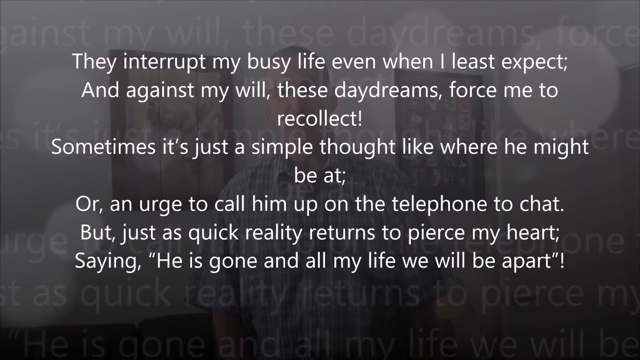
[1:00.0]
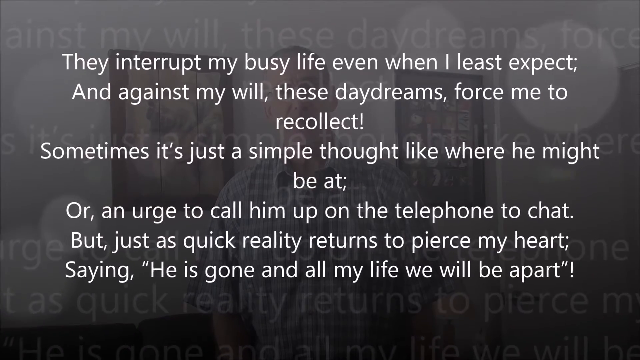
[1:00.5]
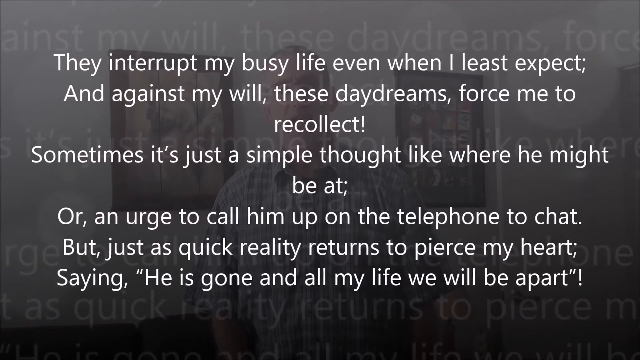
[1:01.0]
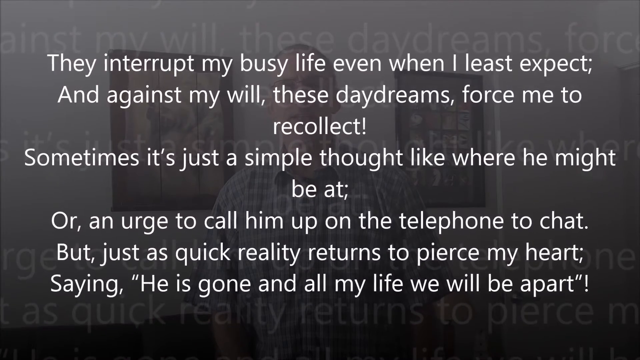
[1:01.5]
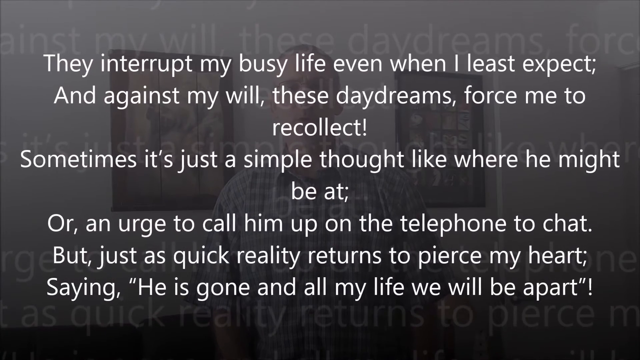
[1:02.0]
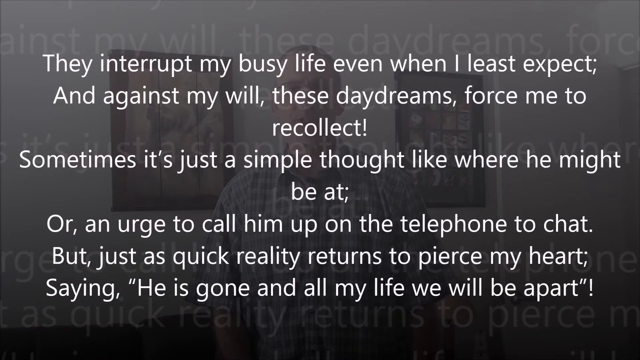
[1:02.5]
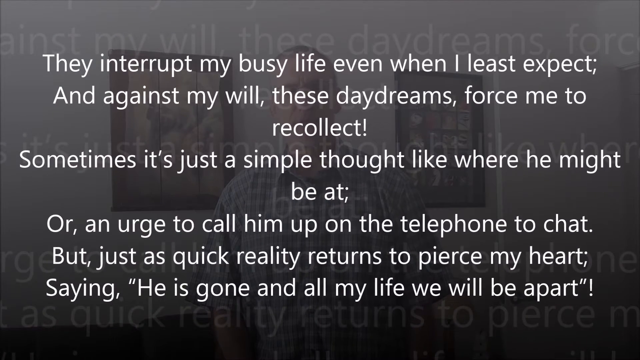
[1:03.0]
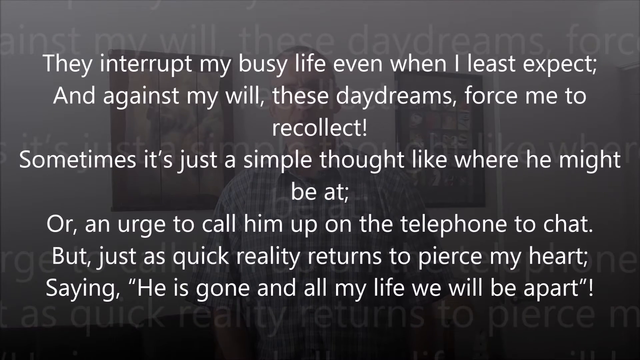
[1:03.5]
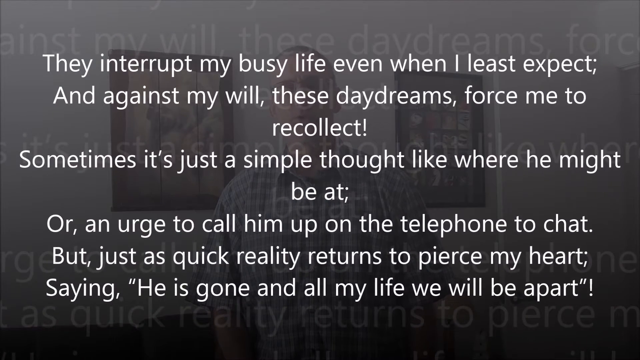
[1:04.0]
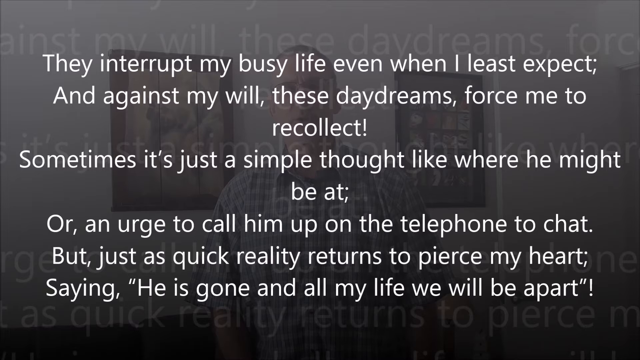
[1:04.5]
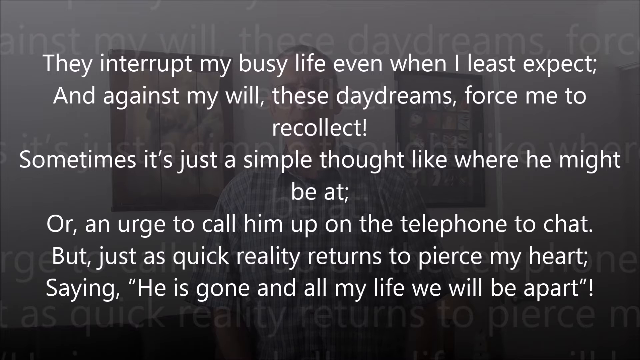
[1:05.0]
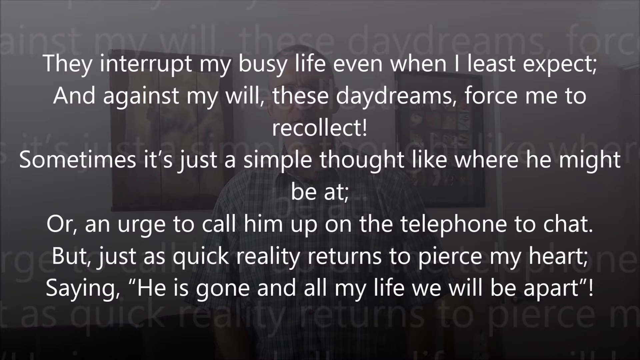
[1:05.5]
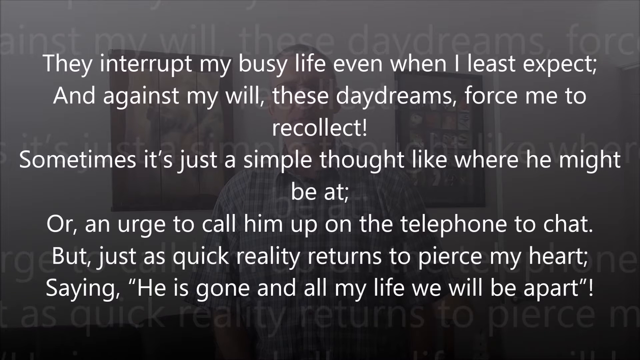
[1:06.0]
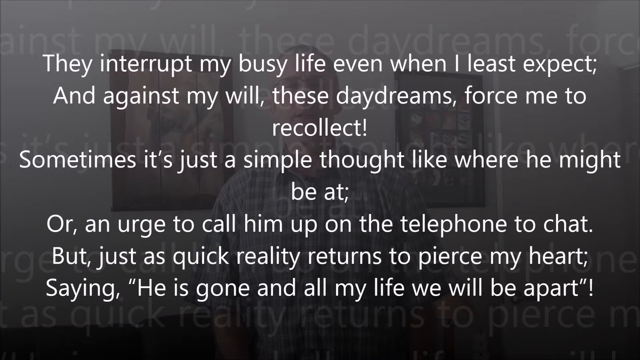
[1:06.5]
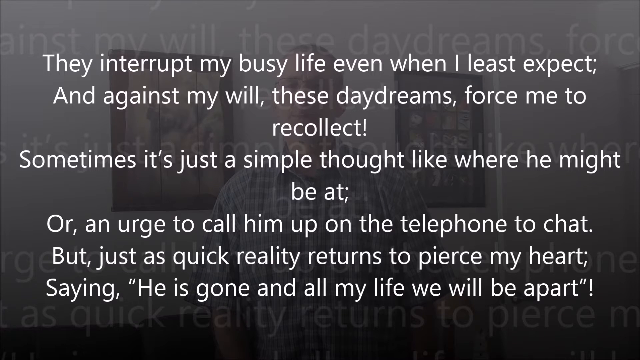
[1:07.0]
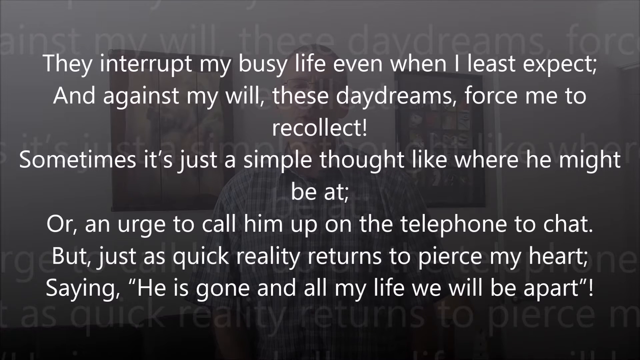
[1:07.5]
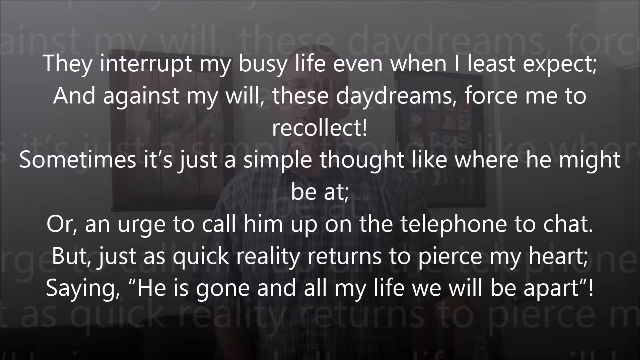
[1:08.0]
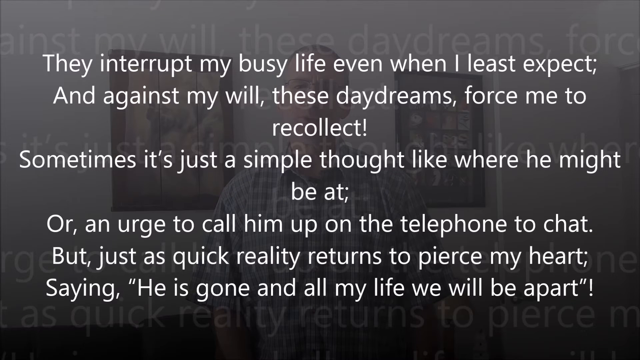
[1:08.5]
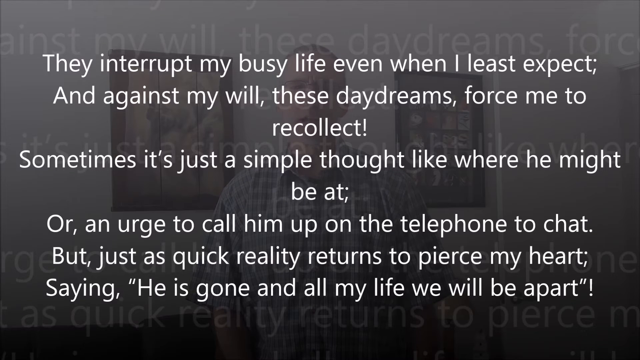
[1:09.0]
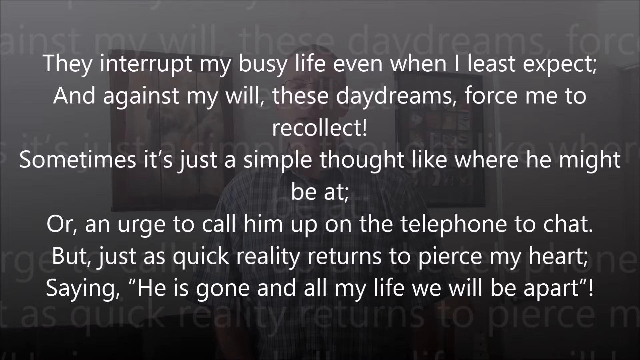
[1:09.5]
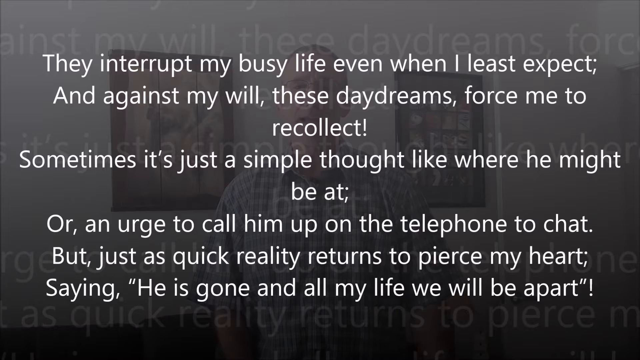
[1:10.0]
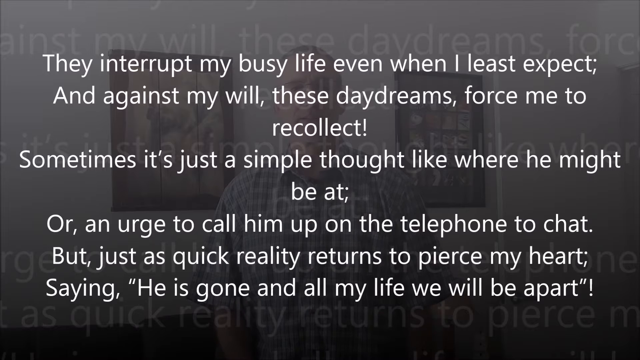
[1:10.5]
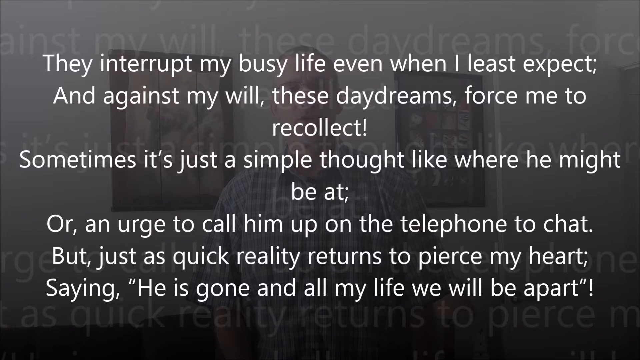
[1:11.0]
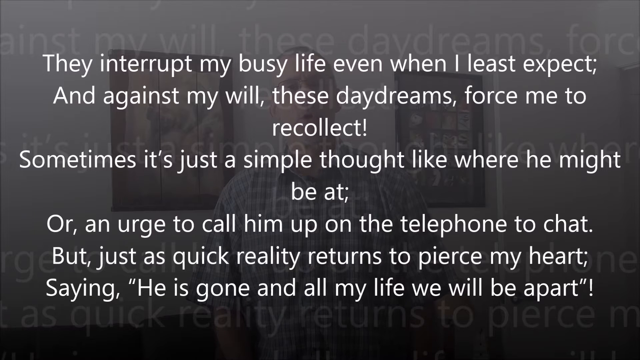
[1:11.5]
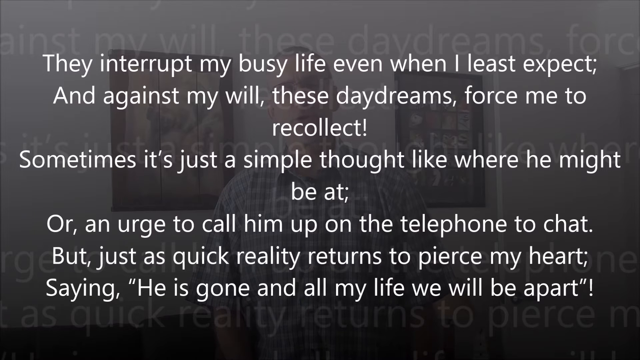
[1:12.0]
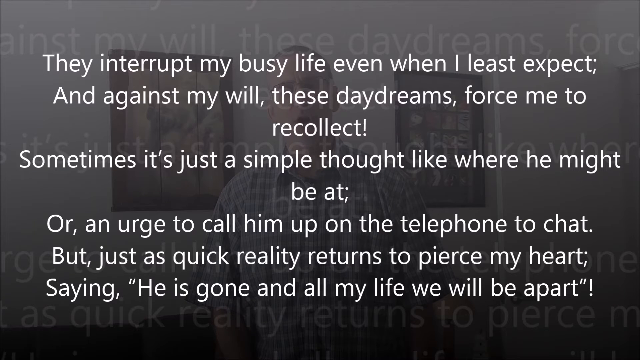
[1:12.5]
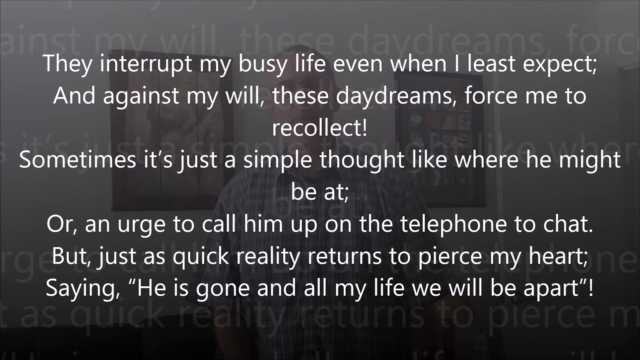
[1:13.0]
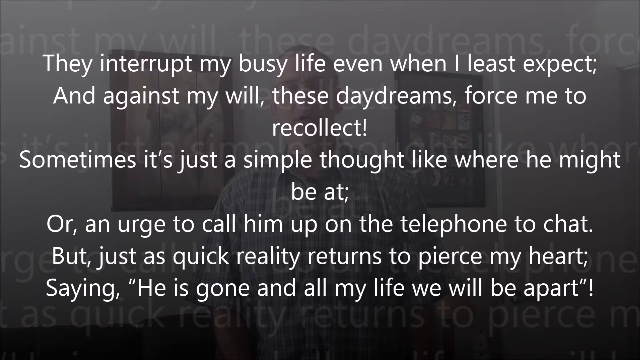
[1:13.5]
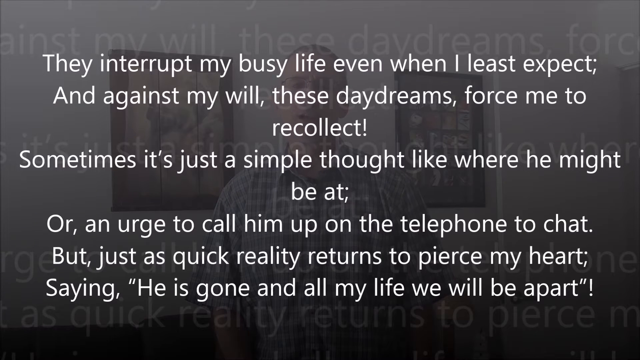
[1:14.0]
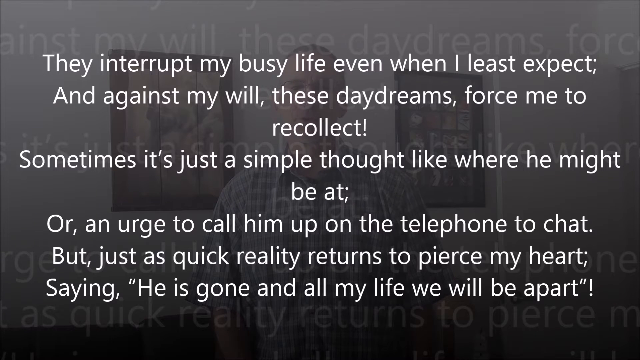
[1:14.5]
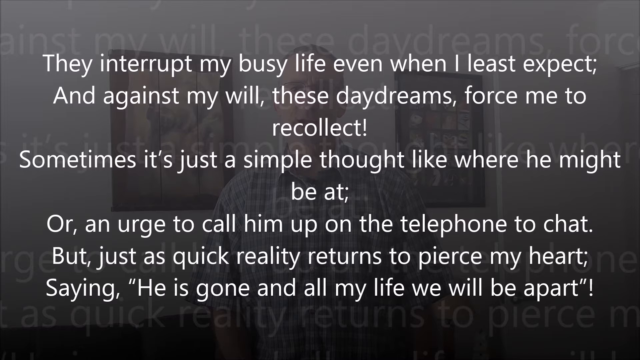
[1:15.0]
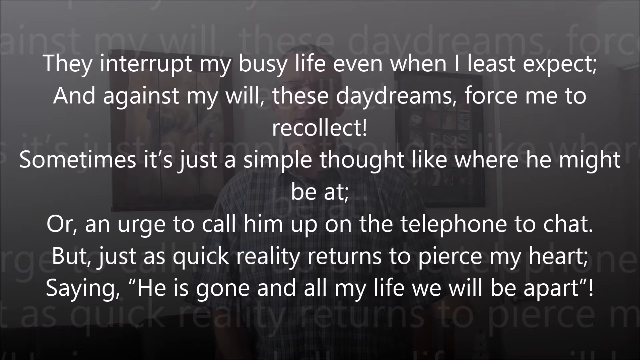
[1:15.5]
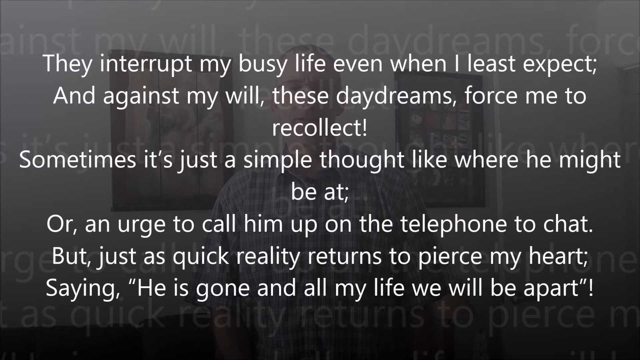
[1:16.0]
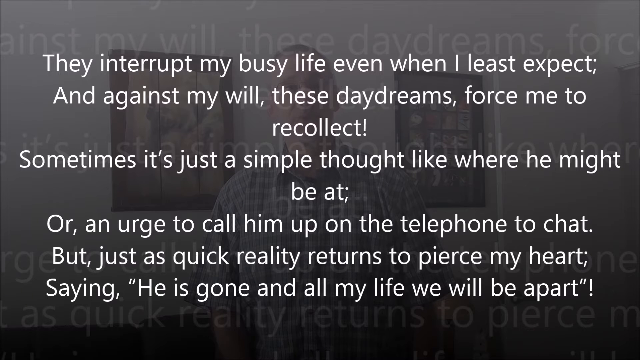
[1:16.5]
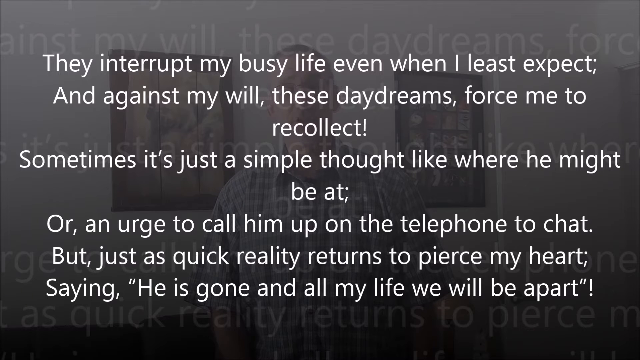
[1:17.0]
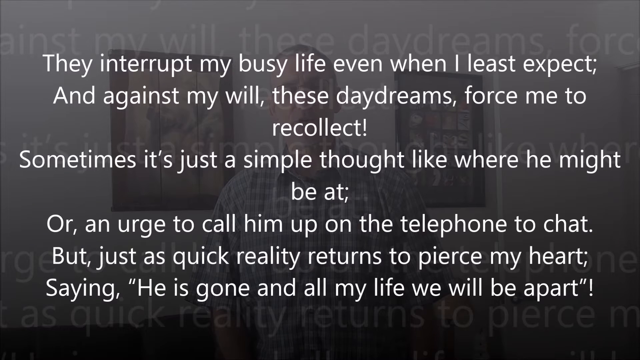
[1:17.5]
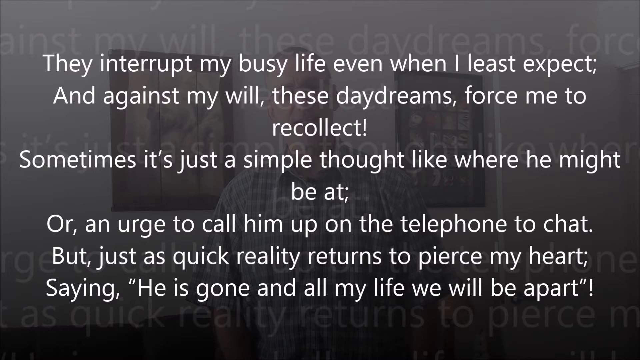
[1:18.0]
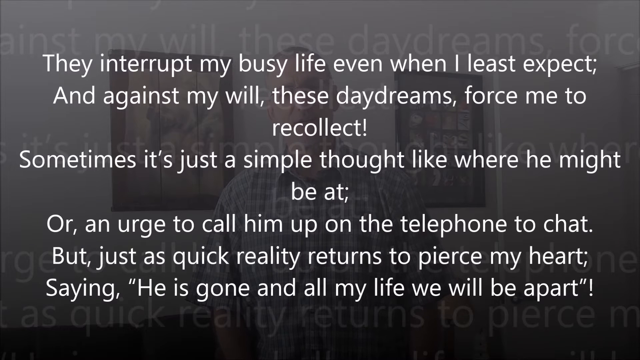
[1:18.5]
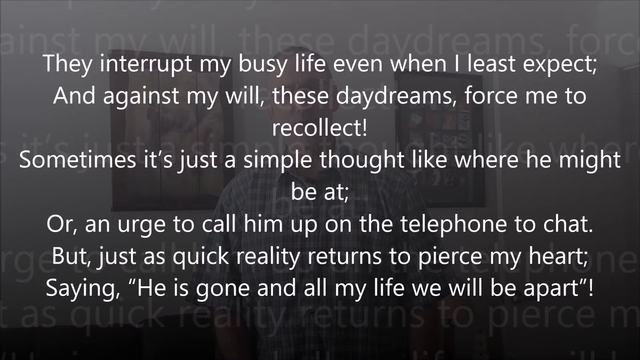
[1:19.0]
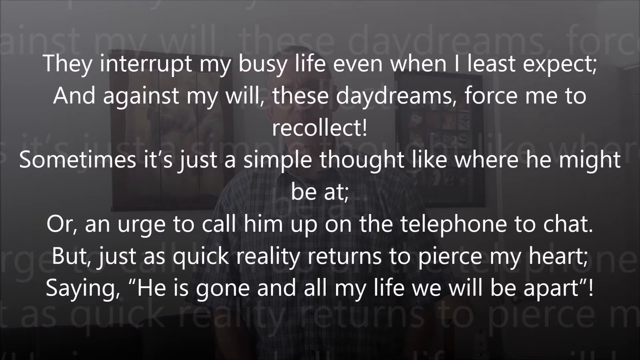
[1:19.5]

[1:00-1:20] The same poem excerpt is on screen in a white font that looks like it may be Arial. Very white, opaque words in the background mirror the words of the poem. The man in the gray and white plaid shirt, with glasses and gray hair, can be slightly seen in the background, still talking to the camera while the words are on the screen. The words zoom in a little until they are a good size and pause on the screen. The words of the poem rhyme.